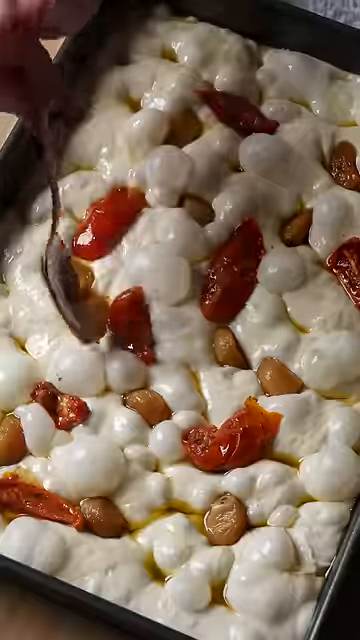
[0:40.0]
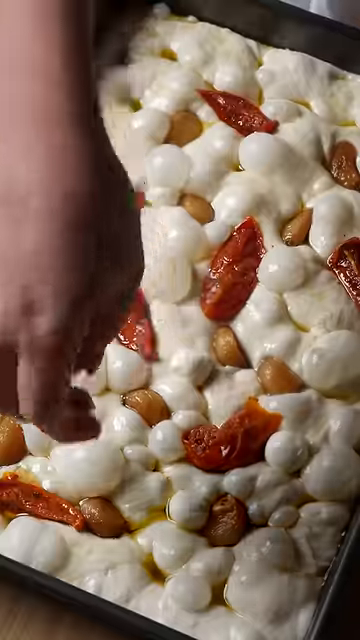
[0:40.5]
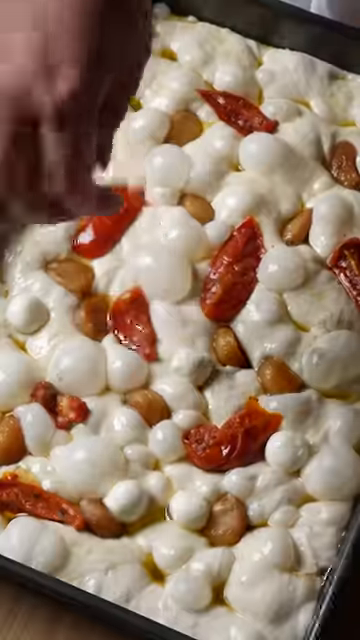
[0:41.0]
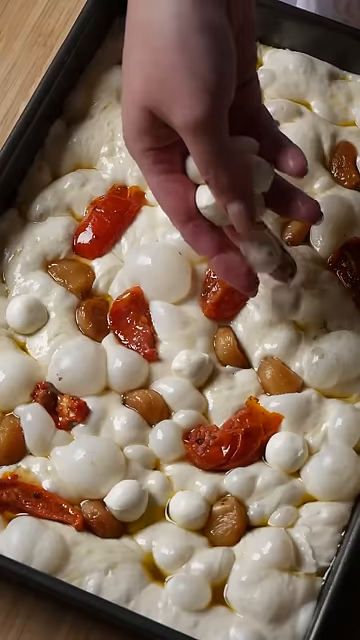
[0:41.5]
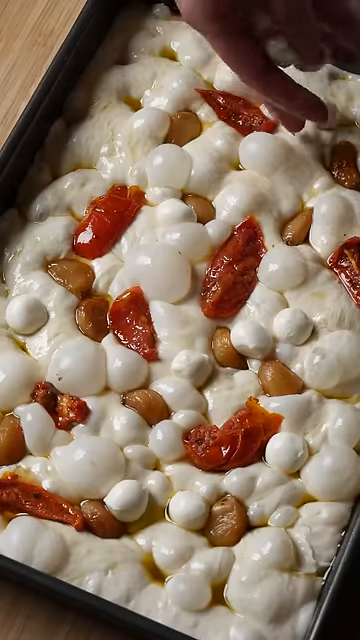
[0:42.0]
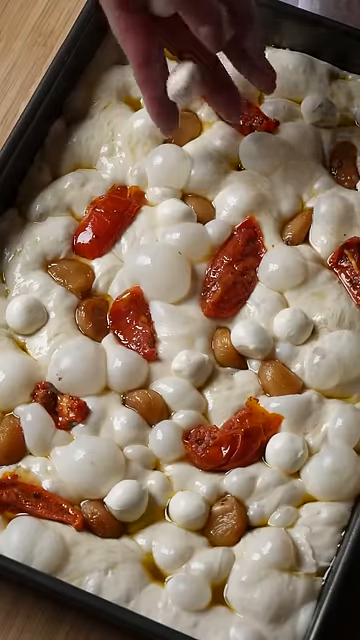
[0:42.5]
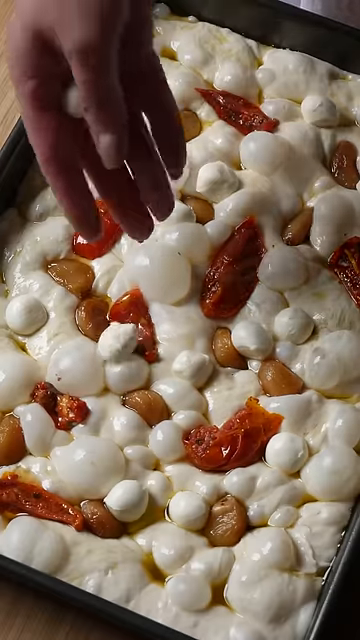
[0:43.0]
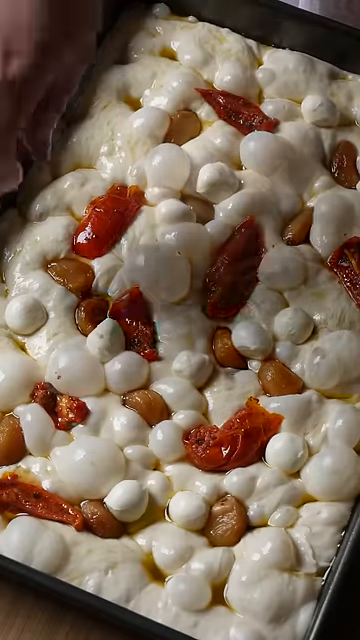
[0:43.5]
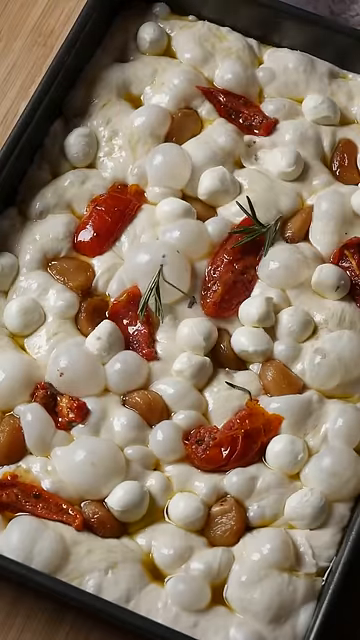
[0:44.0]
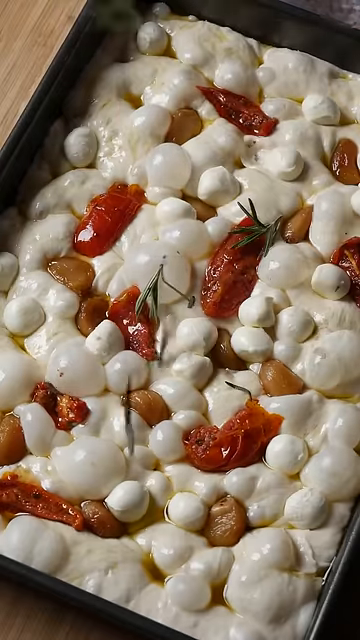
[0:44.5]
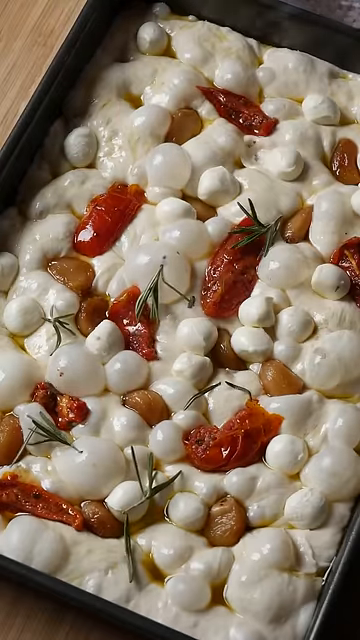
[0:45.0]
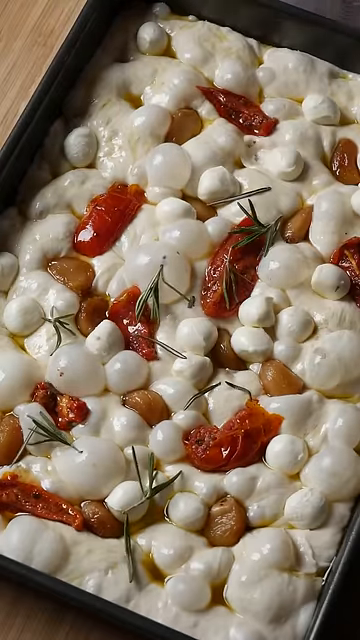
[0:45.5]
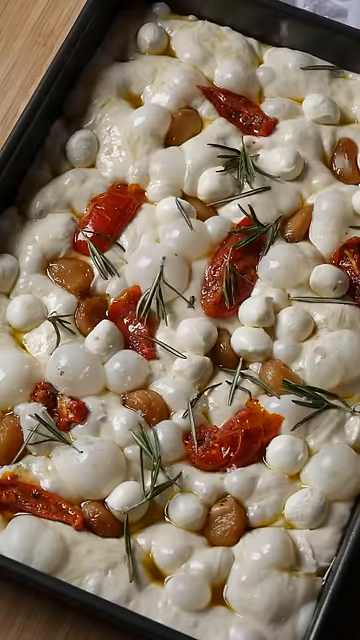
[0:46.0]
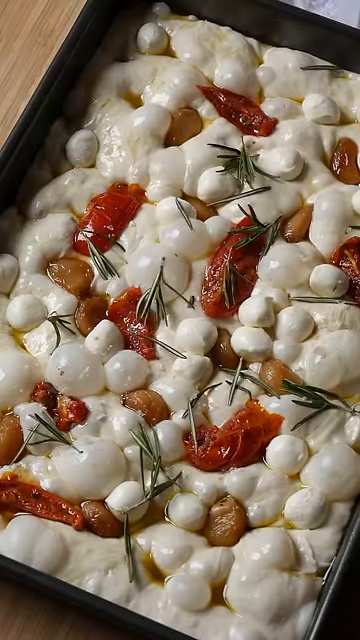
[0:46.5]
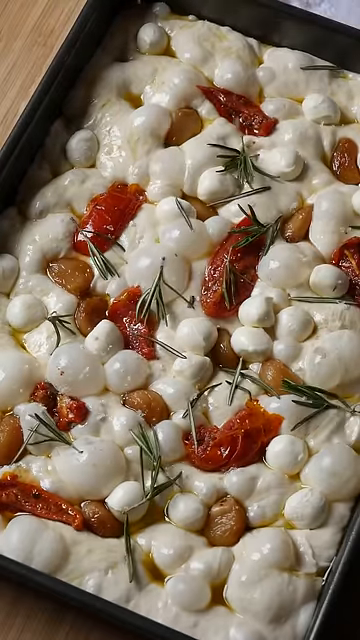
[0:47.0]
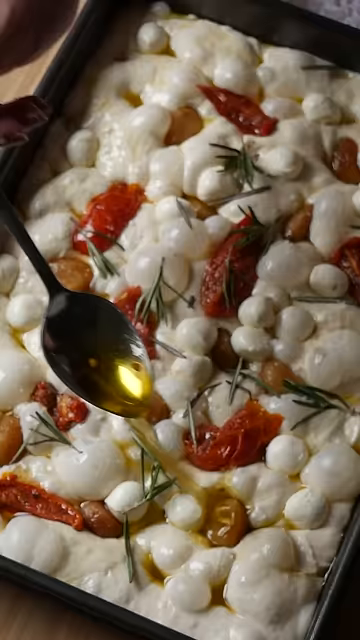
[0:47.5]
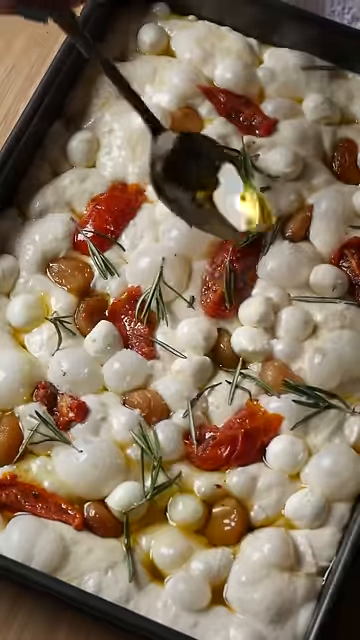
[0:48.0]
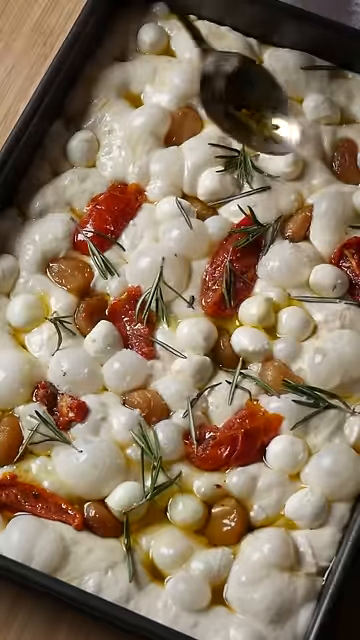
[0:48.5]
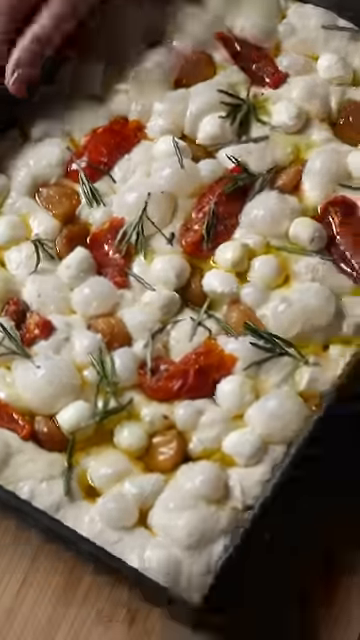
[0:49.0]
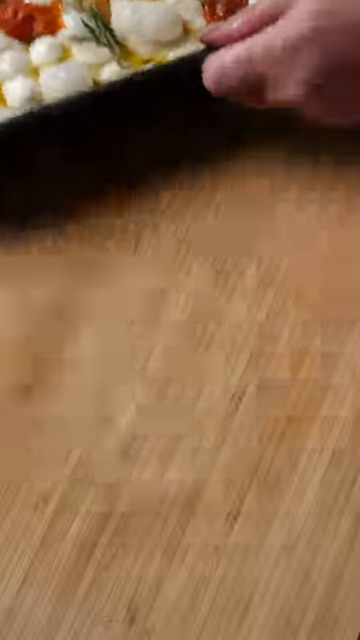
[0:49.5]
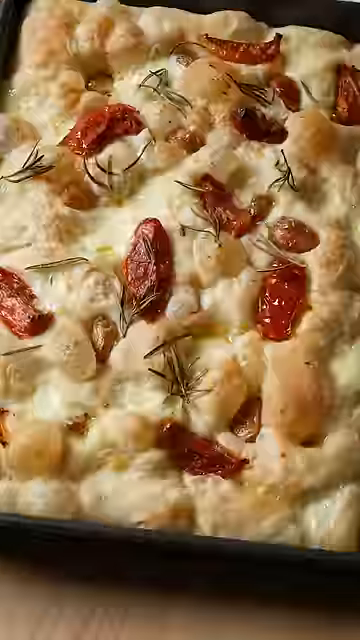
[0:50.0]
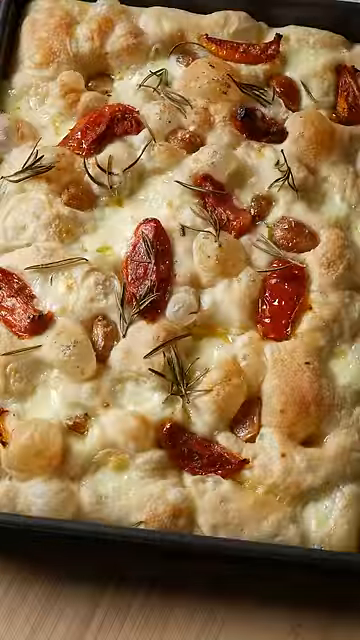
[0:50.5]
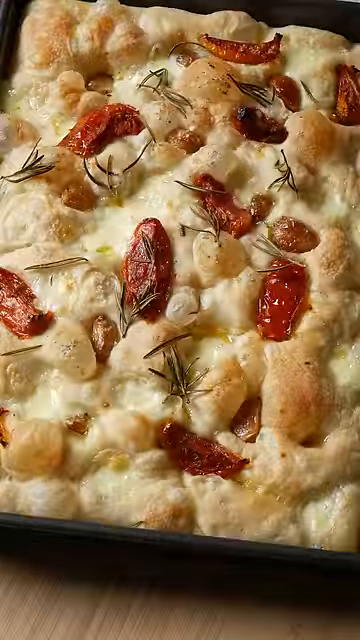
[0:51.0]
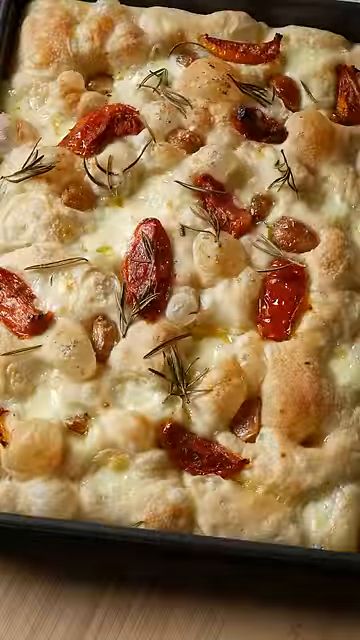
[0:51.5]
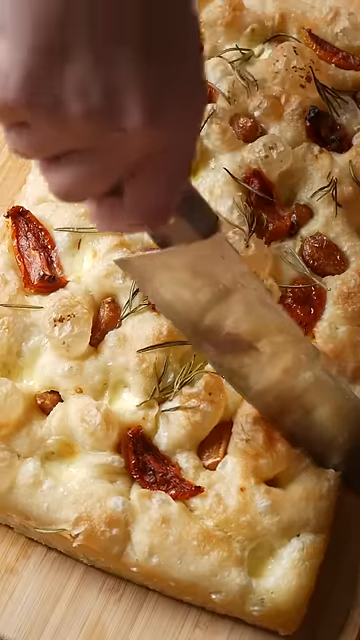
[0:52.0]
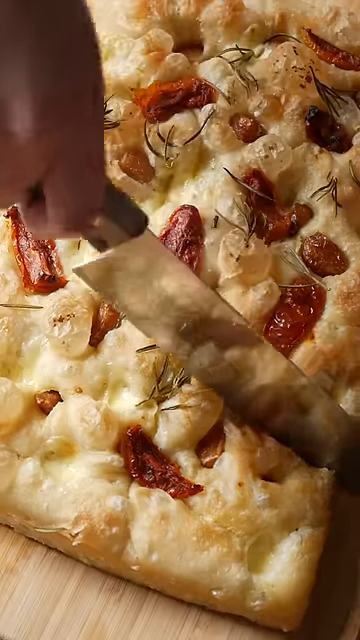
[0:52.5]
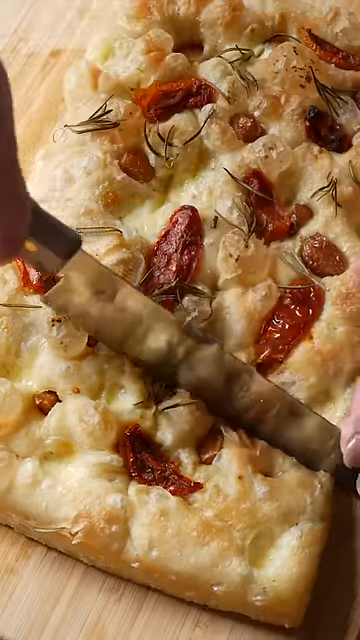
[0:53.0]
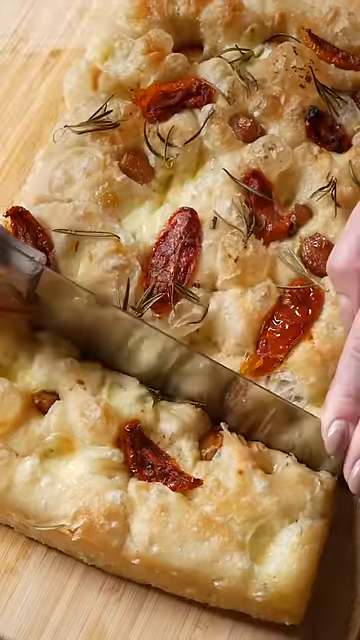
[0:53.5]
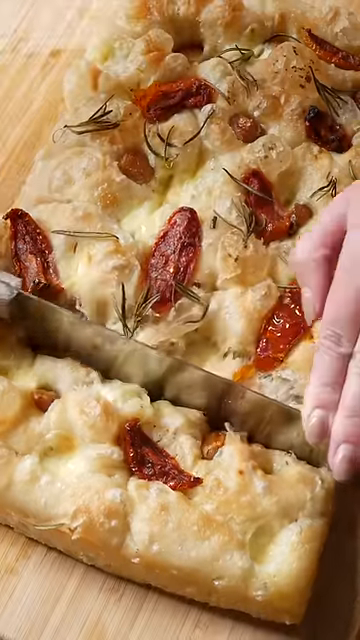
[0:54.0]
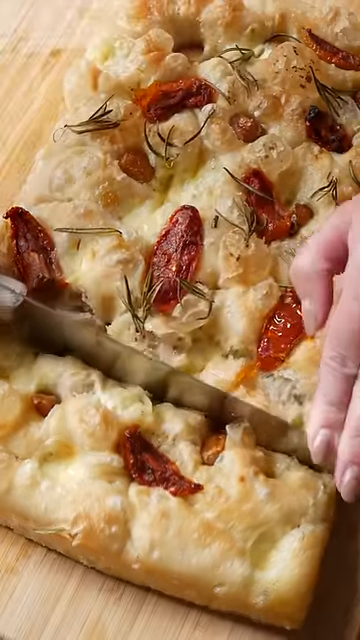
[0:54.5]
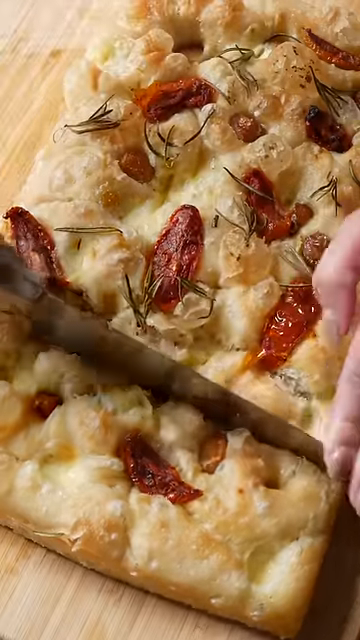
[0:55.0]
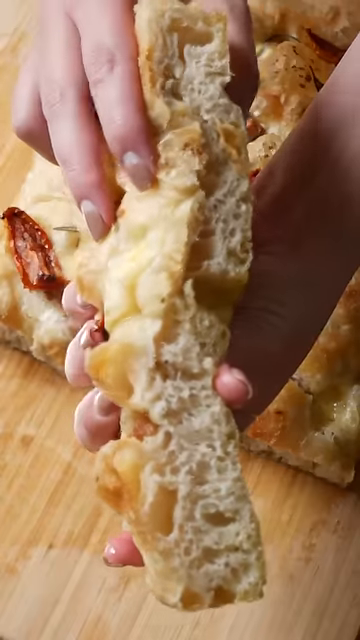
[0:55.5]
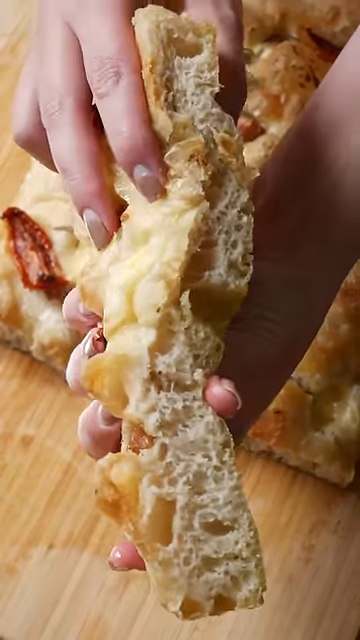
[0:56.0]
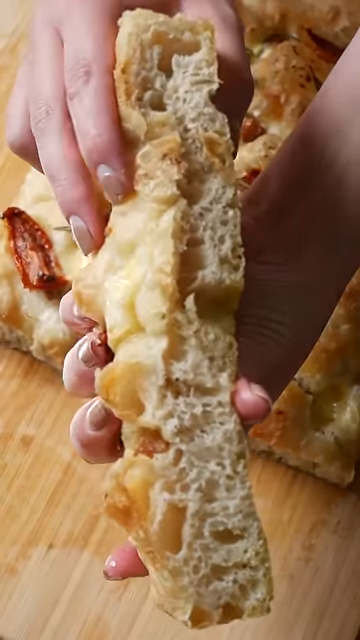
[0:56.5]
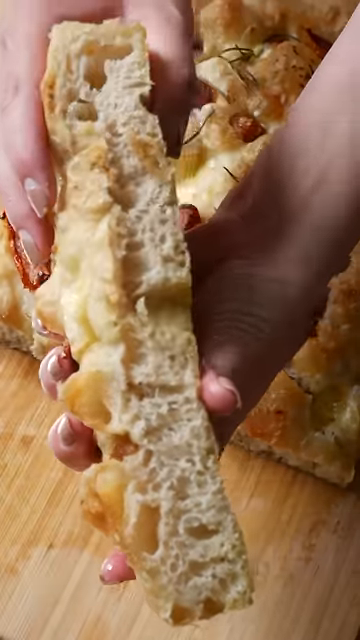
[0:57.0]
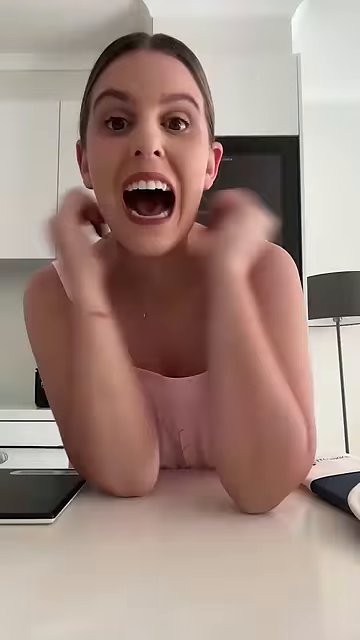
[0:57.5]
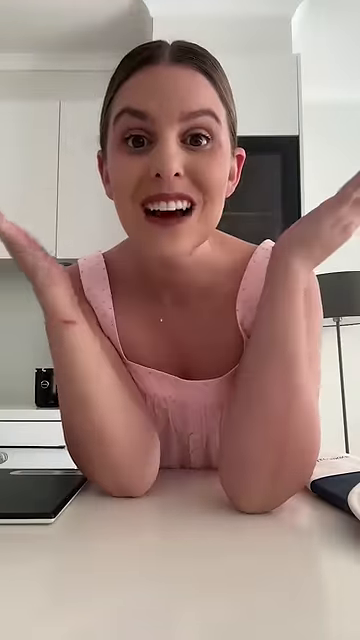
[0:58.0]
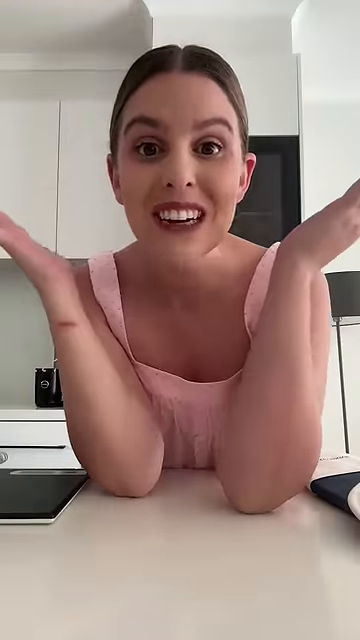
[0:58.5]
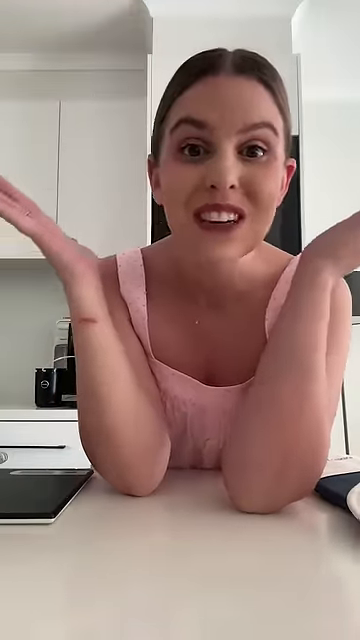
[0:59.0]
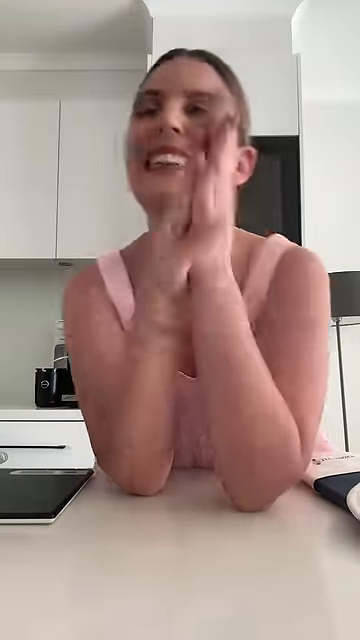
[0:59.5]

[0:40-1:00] The video, titled Garlic Confit Sun-Dried Tomato and Baby Bocconicini Focaccia, starts with a small white Le Creuset pot full of de-skinned garlic being covered in olive oil, herbs and spices. The lid is placed on it and then taken off to show the cooked garlic. The person shows the dough ready to go into the focaccia pan, which is being oiled with oil and vinegar. Using their hands, the person lowers the dough into the pan, spreads it evenly to all the sides, and covers it with a striped dish towel. With a spoon, the person covers the raw dough with olive oil, then presses their fingers into the dough, creating air pockets and holes for the garlic and sun-dried tomatoes. The garlic and sun-dried tomatoes are spooned on top of the dough along with cheese balls and more herbs and spices. The focaccia then looks to have been baked in an oven, as it is light brown, and it is sliced with a large knife to show the sponginess of the dough. Towards the end, a young woman appears very excited about how her focaccia came out.